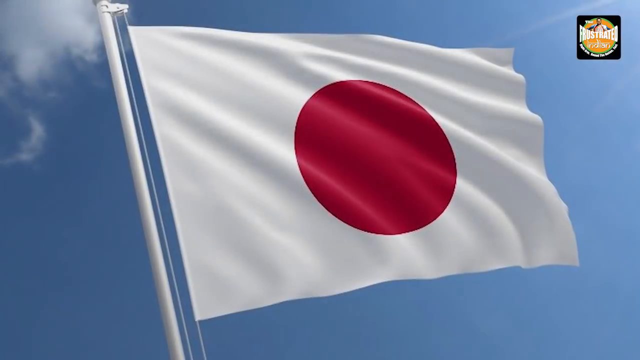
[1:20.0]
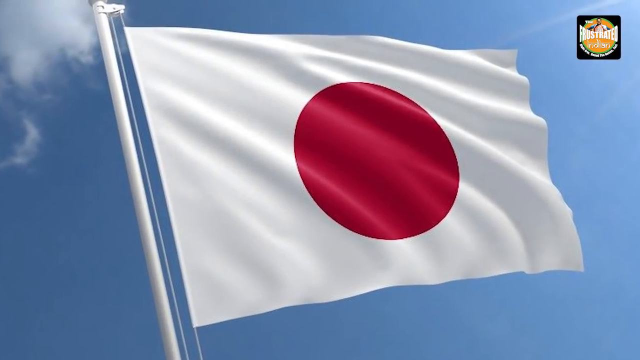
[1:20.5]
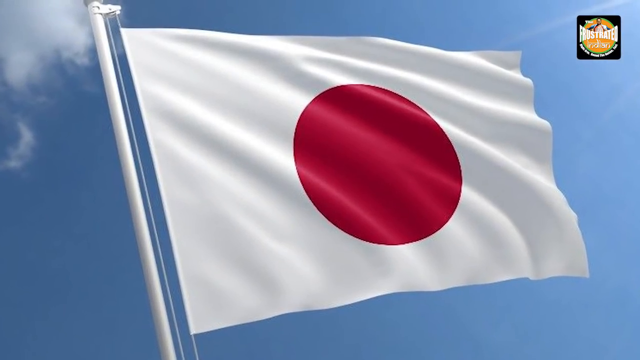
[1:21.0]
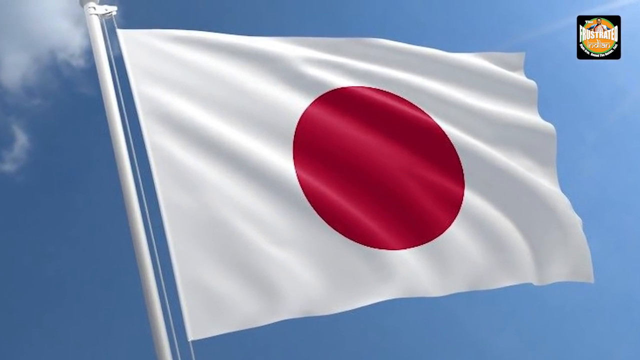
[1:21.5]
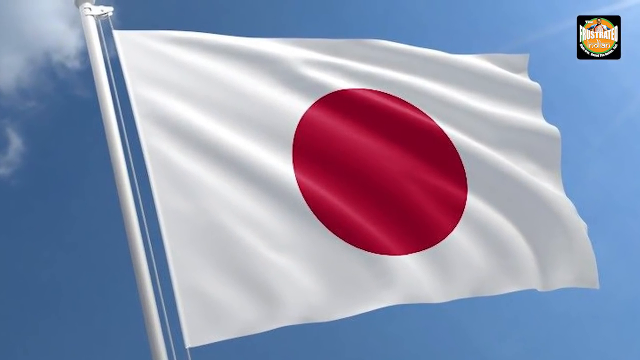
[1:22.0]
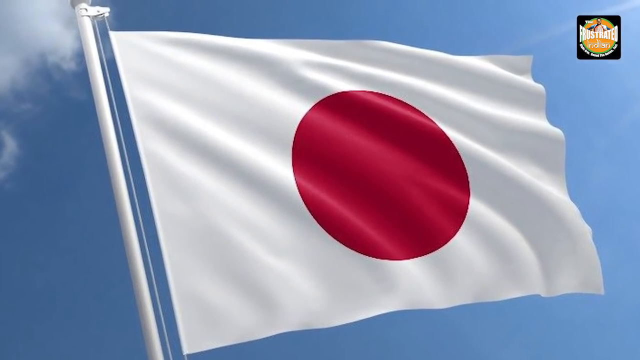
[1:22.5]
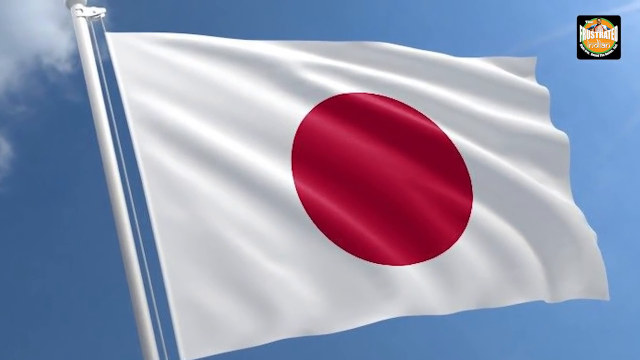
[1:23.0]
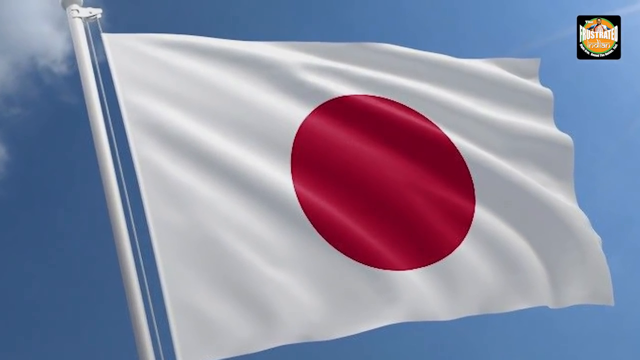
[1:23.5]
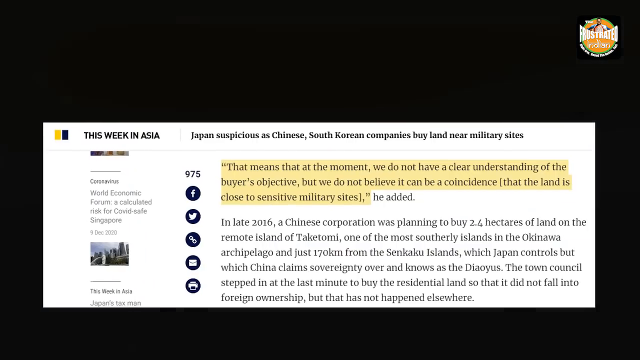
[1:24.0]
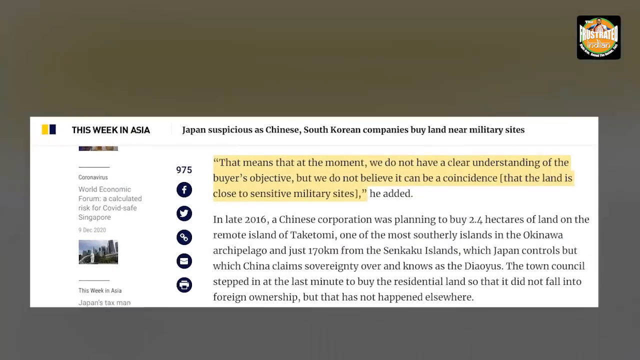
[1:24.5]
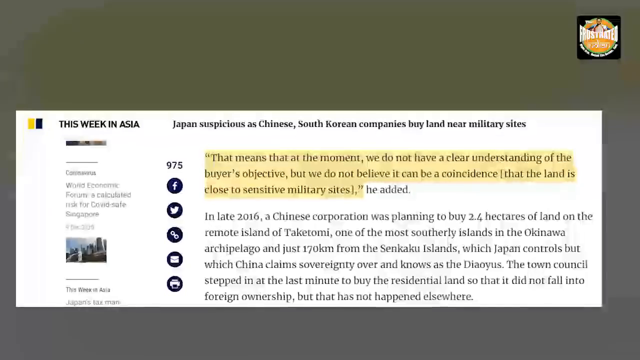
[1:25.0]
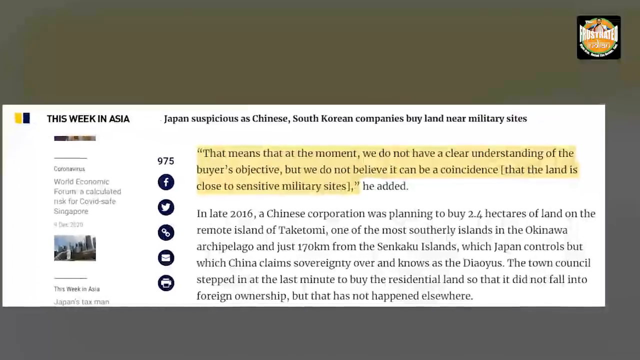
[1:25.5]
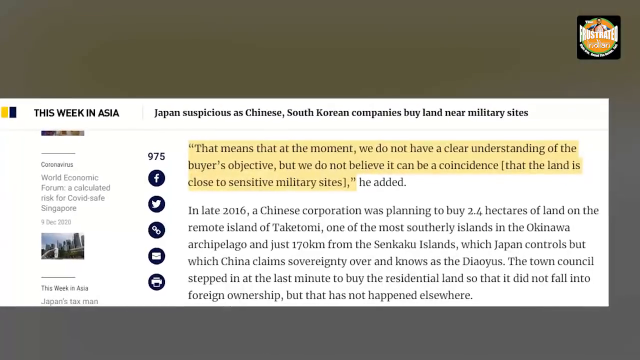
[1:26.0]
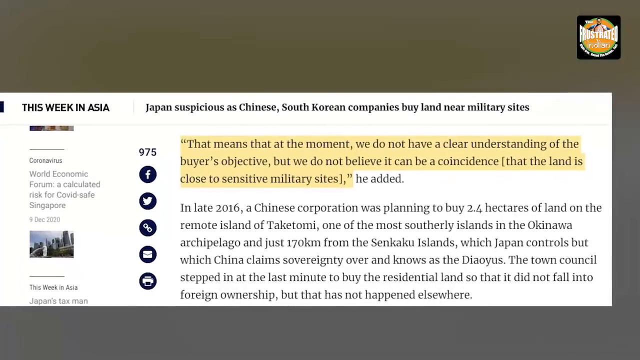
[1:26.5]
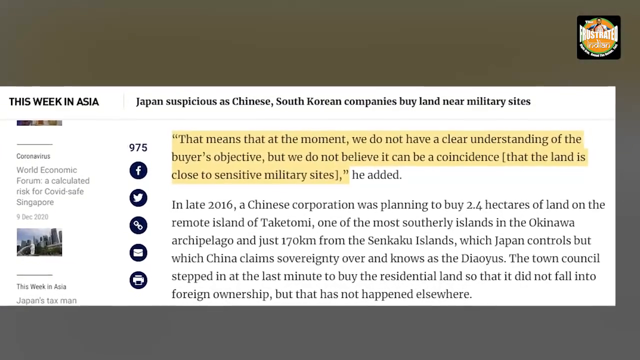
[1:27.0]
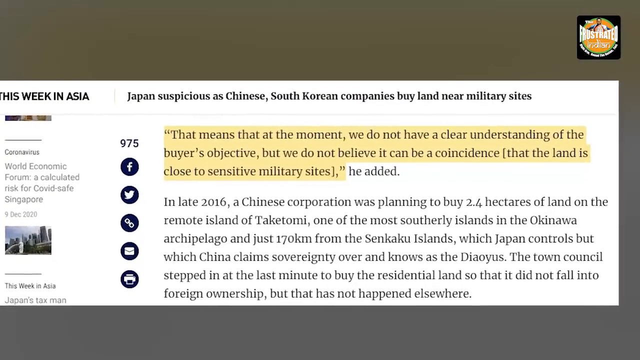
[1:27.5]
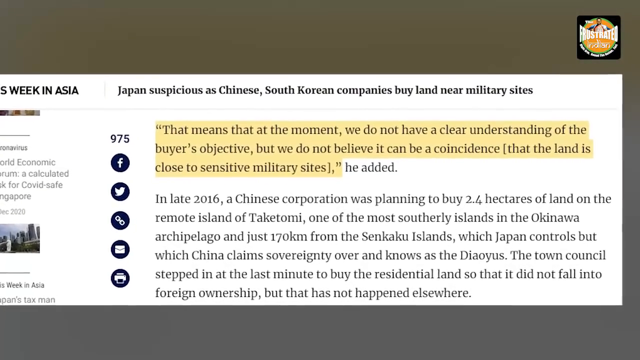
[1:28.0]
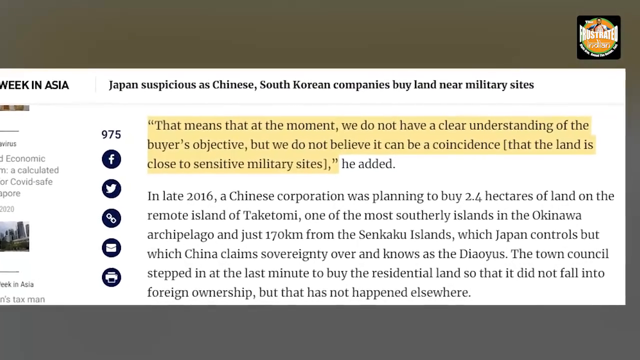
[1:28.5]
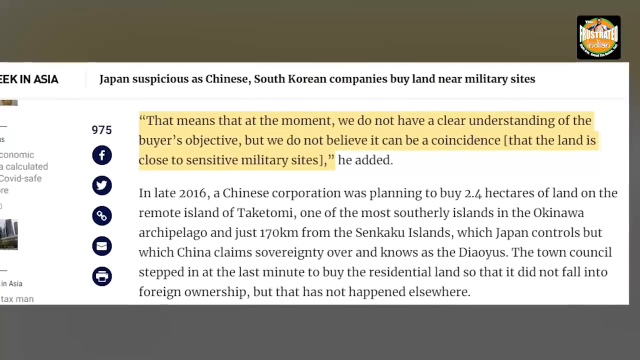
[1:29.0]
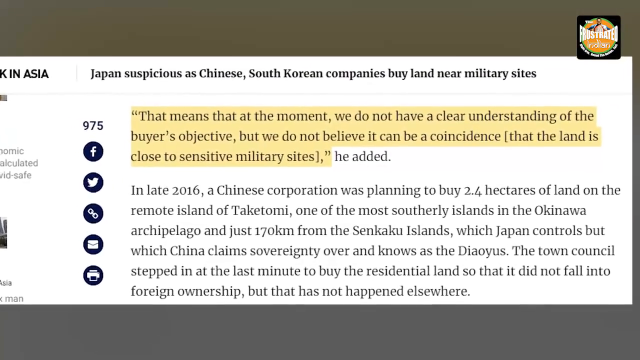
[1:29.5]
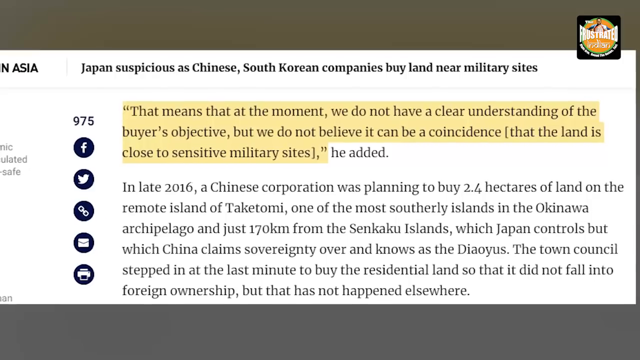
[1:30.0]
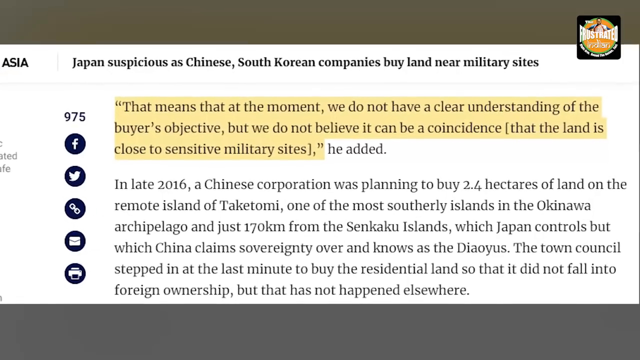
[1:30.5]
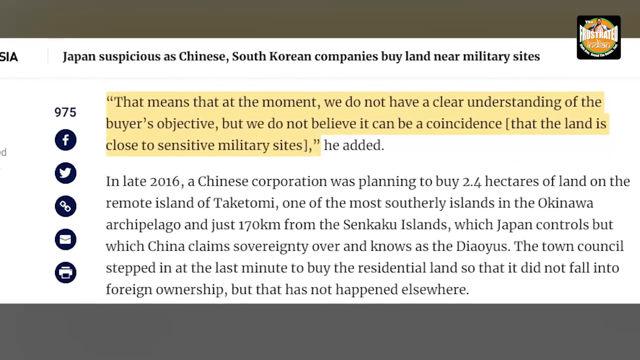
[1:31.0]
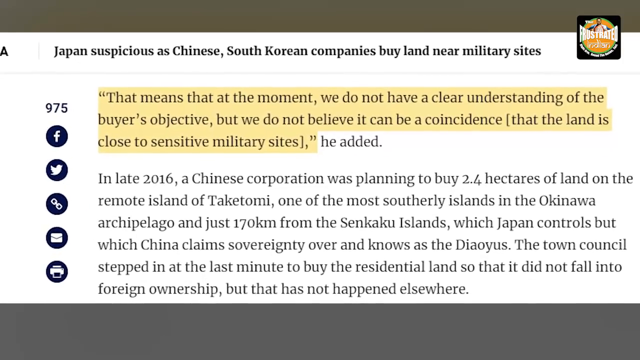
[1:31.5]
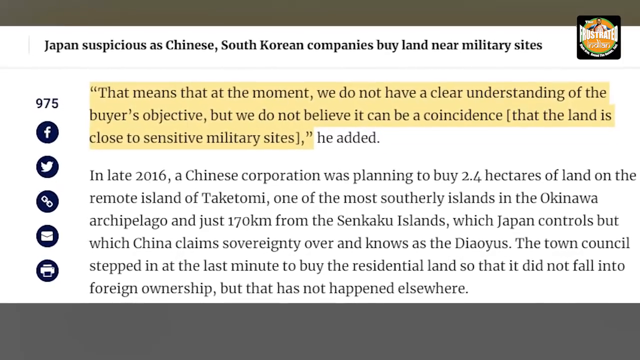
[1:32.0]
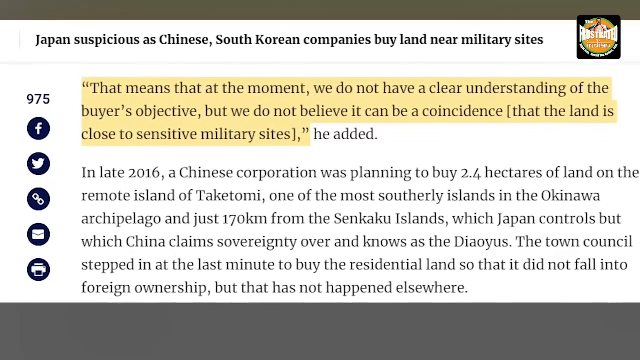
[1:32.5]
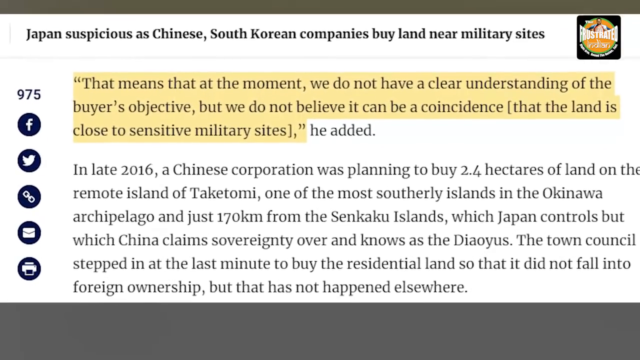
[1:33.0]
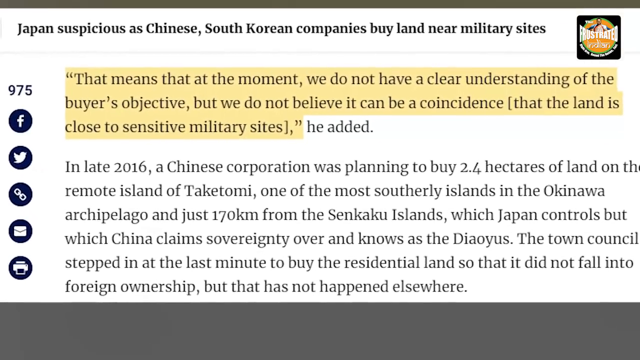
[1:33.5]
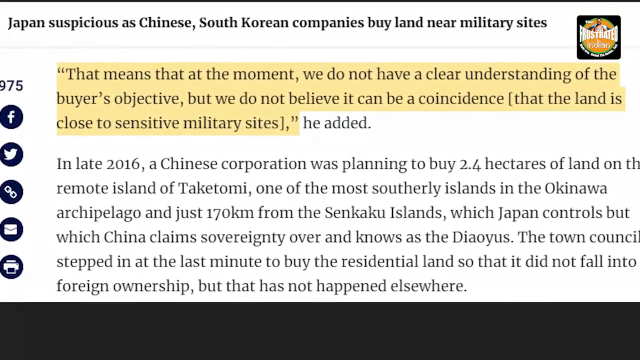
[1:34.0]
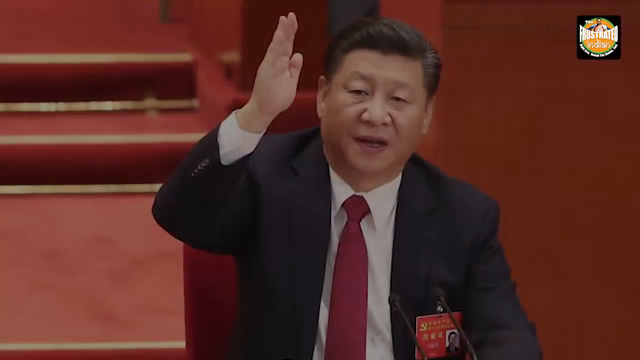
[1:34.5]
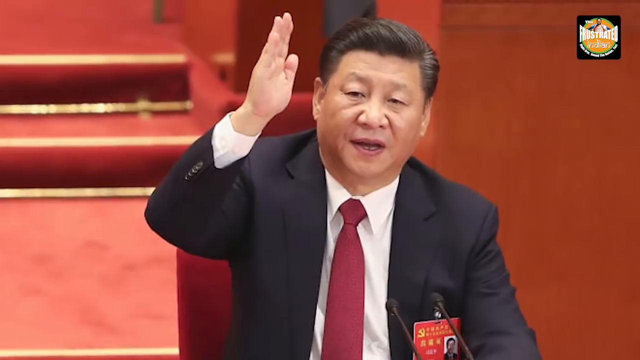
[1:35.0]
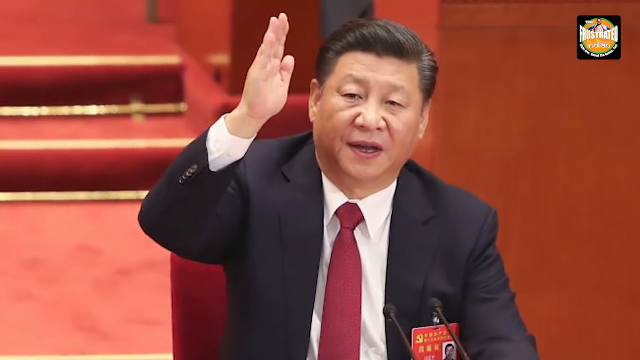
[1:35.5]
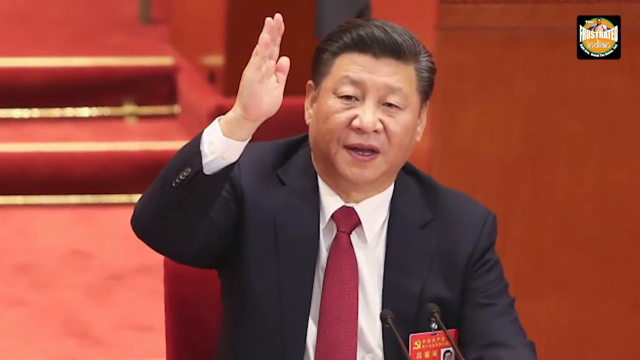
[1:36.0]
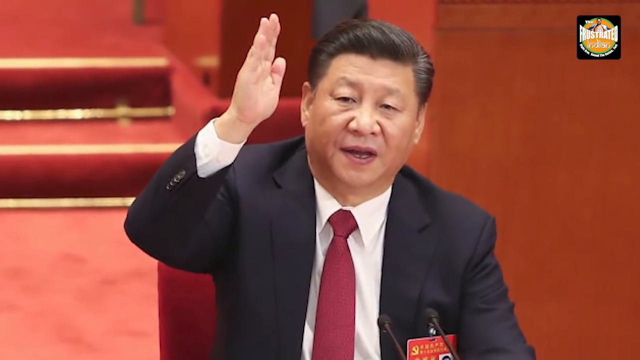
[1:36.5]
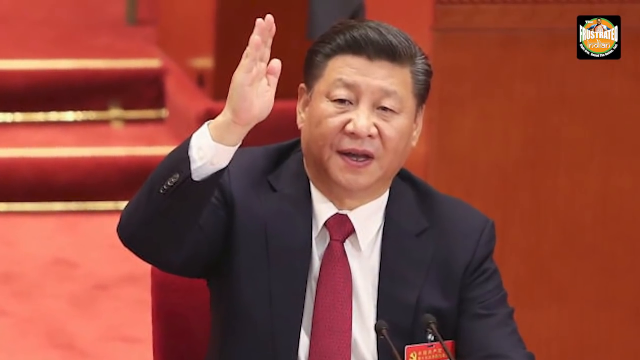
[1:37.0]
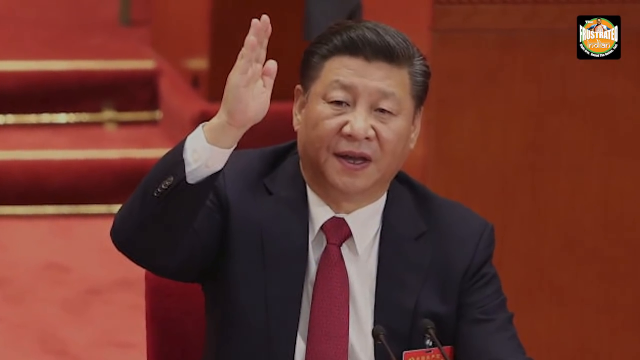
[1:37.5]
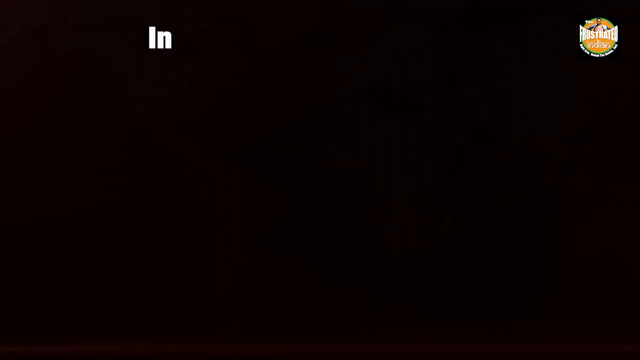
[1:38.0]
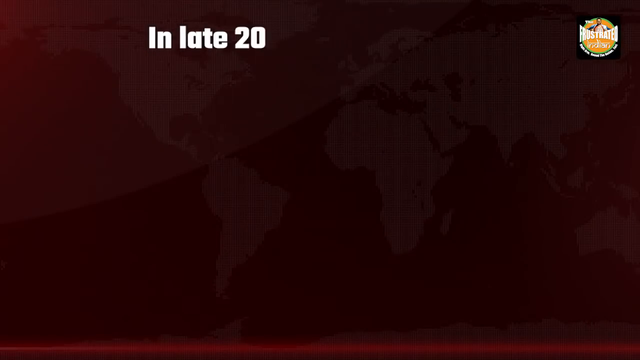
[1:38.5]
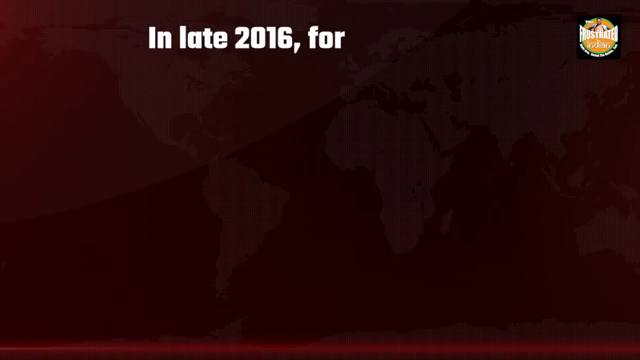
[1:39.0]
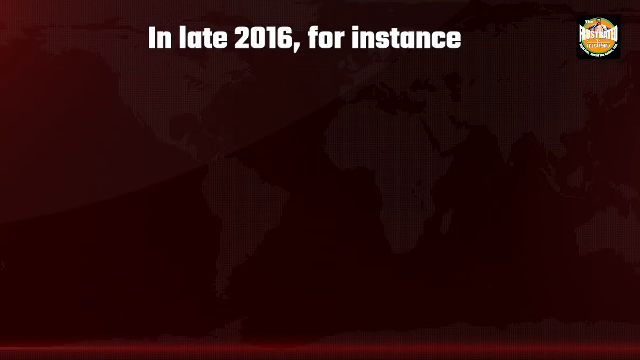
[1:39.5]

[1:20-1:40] A flag with a white background and a red circle in the middle is shown against a blue sky, with clouds concentrated in the upper left part of the frame. Then a newspaper article appears in a white rectangle on a grey background, with black text on white; a portion of it is highlighted, with black letters on a yellow background. Next, a photo shows a man in elegant clothes wearing a blue or black jacket, a white shirt and a red tie. He is raising his right arm, and the background is predominantly red. Finally, small white letters appear on screen on a dark red background.